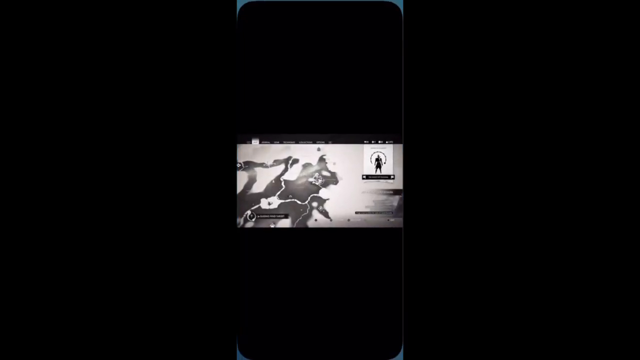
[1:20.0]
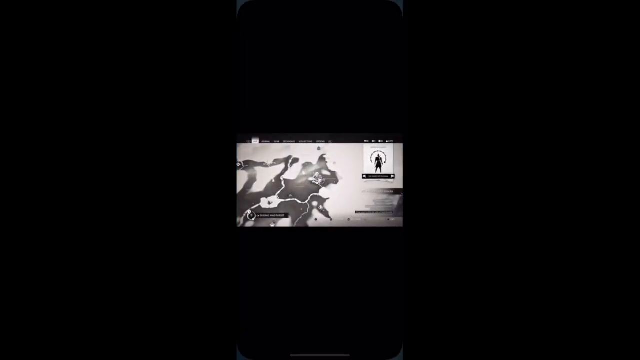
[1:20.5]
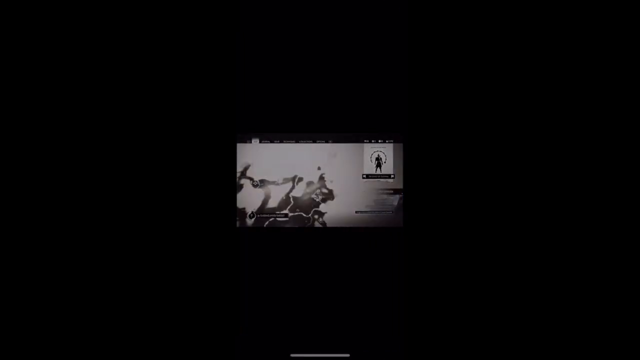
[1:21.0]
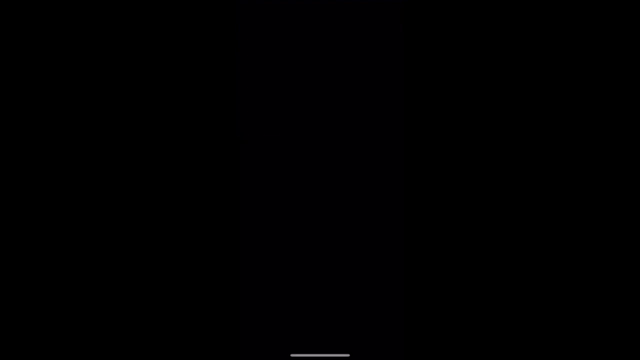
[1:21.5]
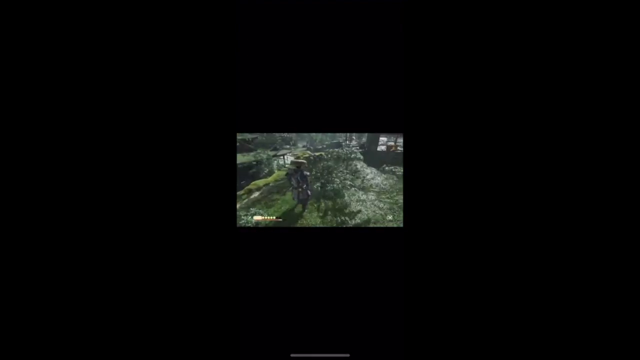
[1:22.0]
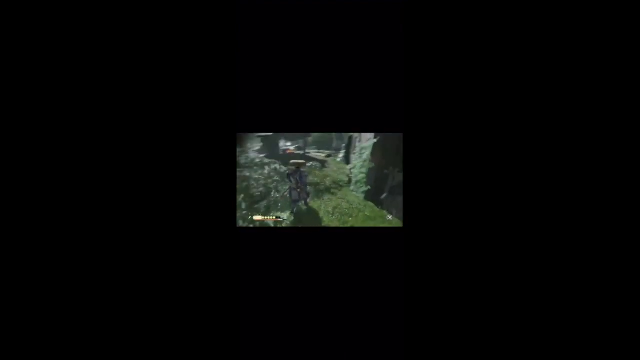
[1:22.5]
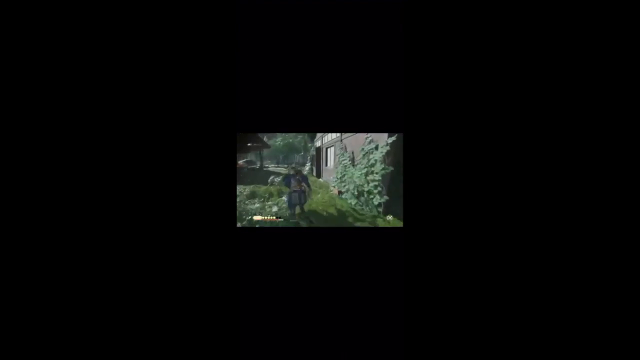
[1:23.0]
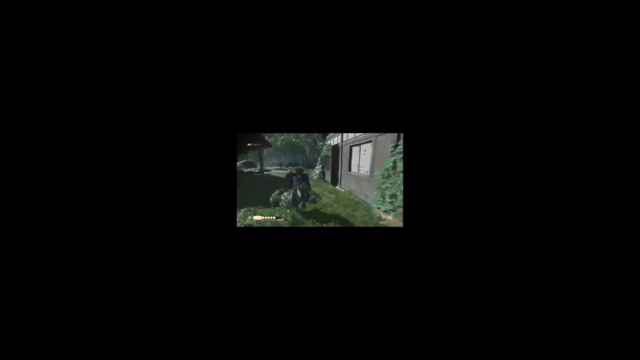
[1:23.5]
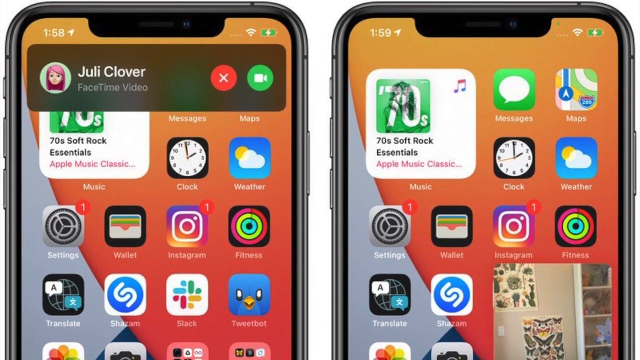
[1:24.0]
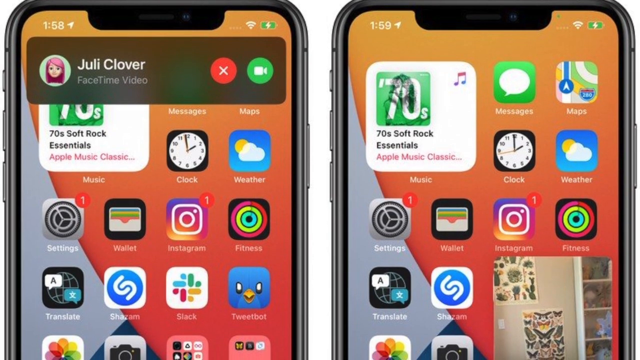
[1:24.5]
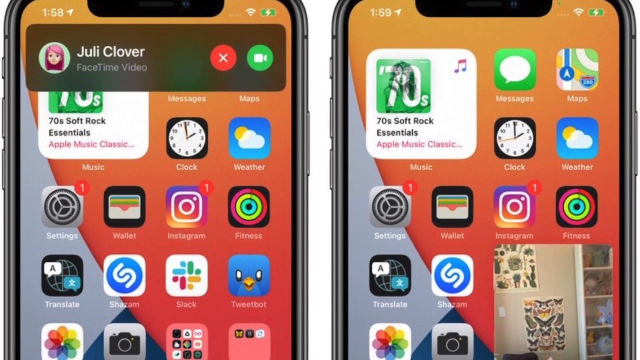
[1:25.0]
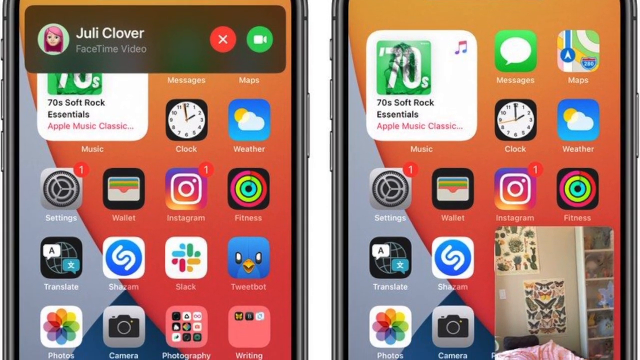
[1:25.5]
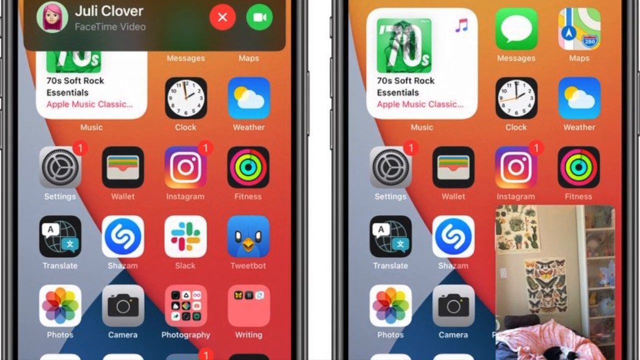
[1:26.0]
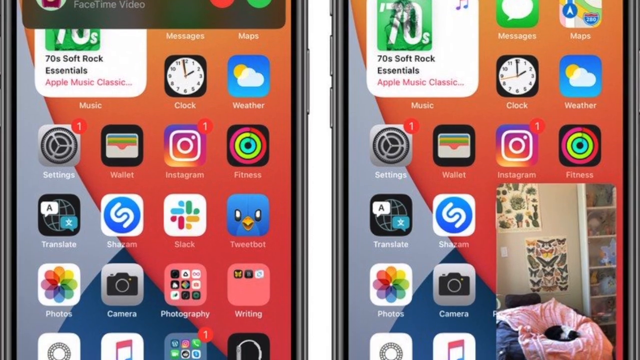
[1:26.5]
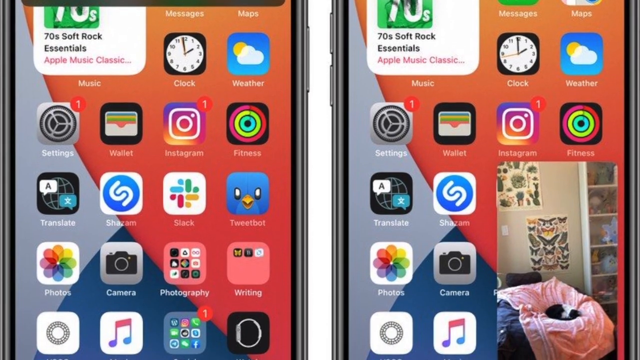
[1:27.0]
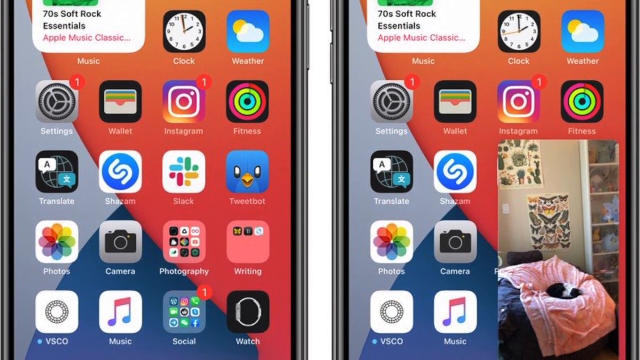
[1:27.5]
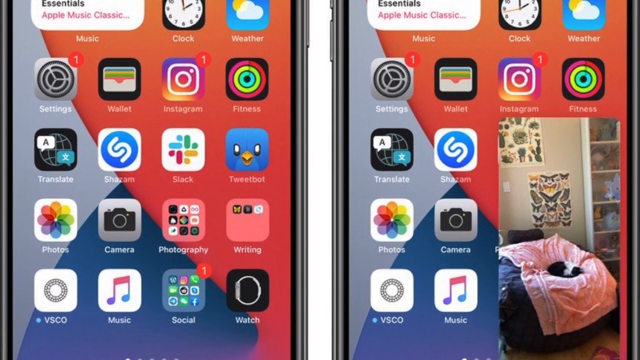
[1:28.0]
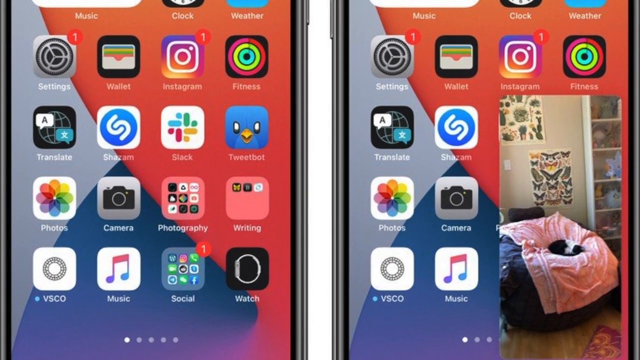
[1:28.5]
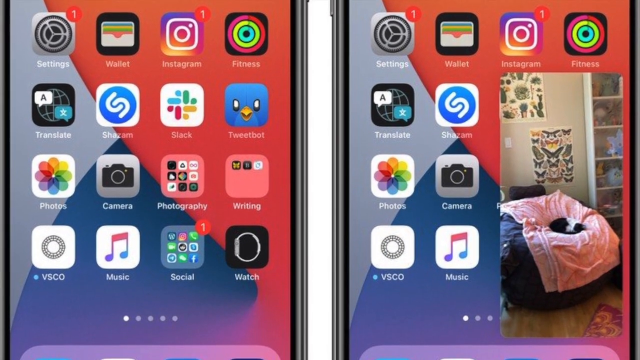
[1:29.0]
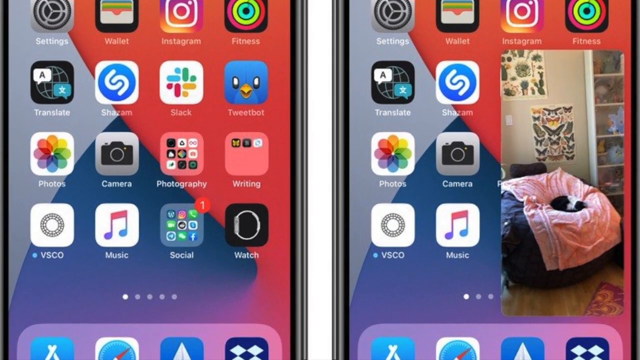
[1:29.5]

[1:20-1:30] The video plays full screen in horizontal mode while the phone is vertical, leaving black bars at the top and bottom. The view then changes to an image of two iPhones on a white background. The iPhone backgrounds have a colorful orange-blue and light-blue design. On the left, someone is calling with FaceTime; on the right, the FaceTime call is open, and the iPhone home screen is still visible on both. The camera pans downwards on the iPhones.